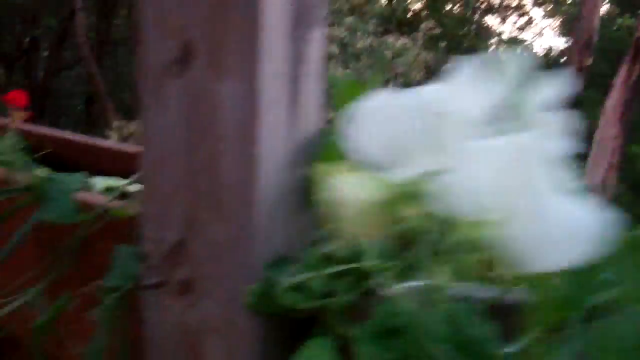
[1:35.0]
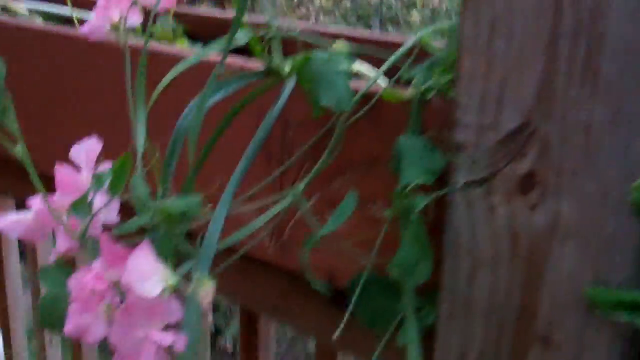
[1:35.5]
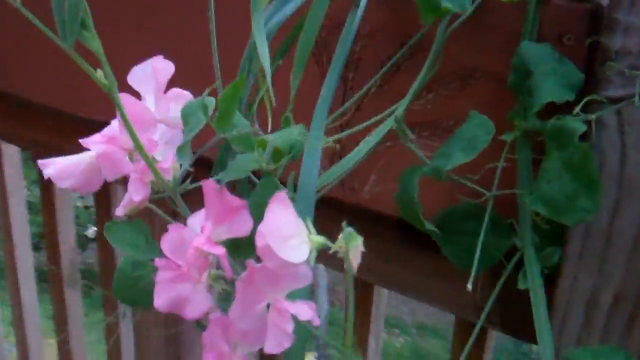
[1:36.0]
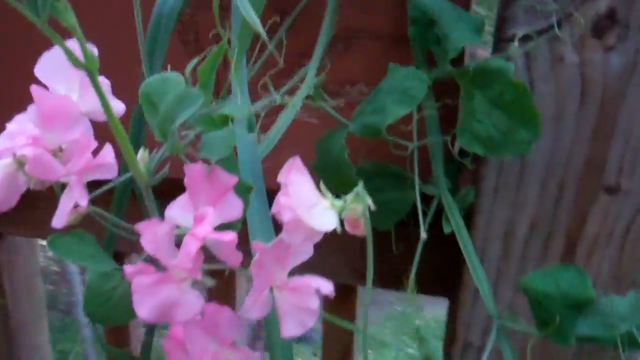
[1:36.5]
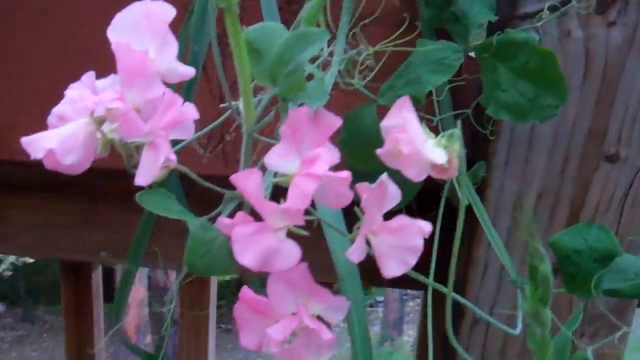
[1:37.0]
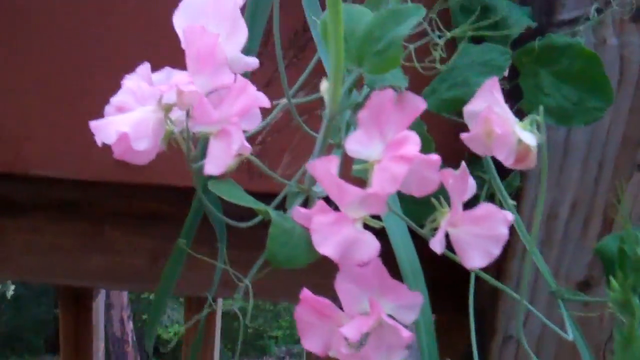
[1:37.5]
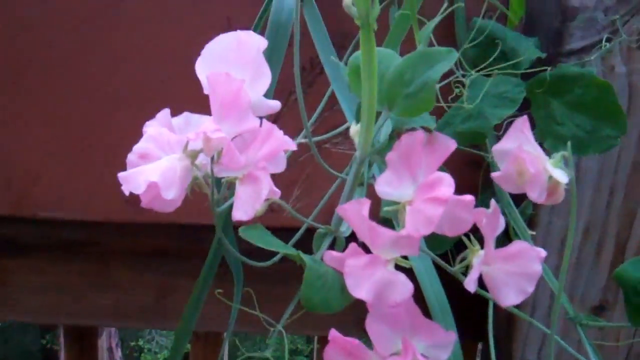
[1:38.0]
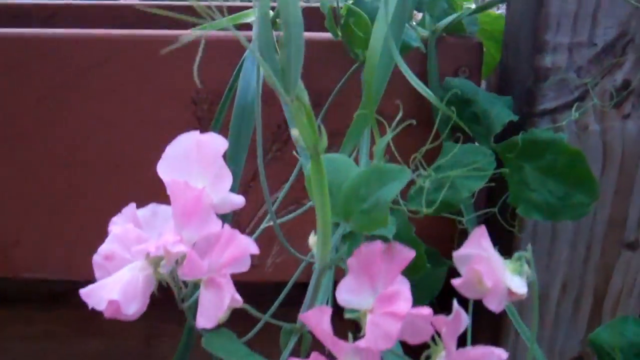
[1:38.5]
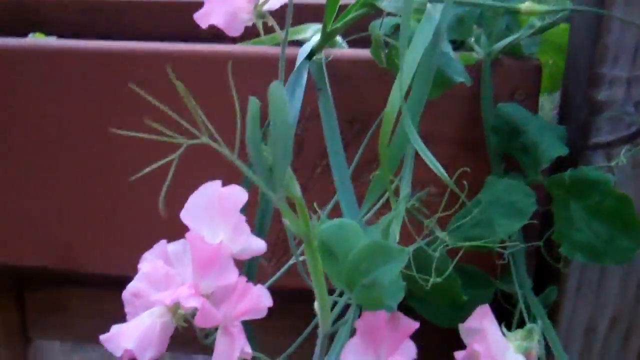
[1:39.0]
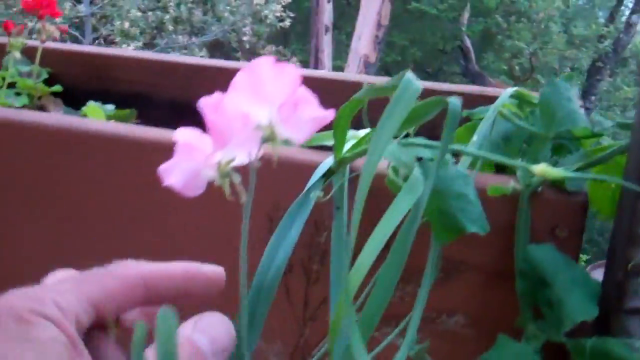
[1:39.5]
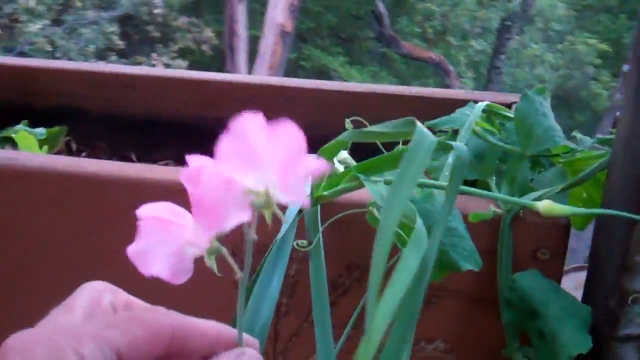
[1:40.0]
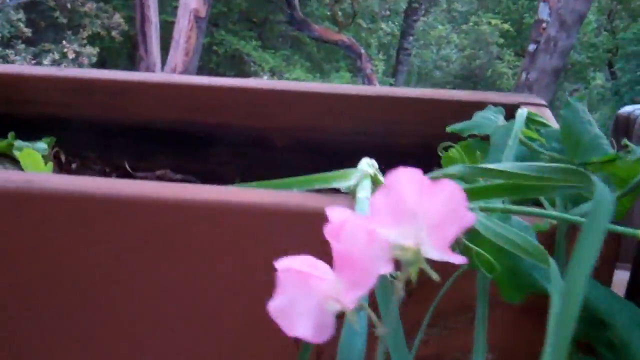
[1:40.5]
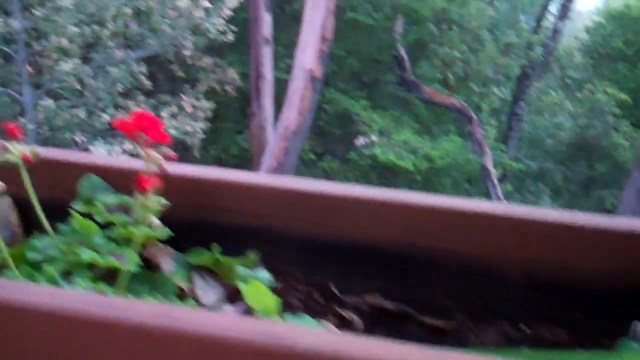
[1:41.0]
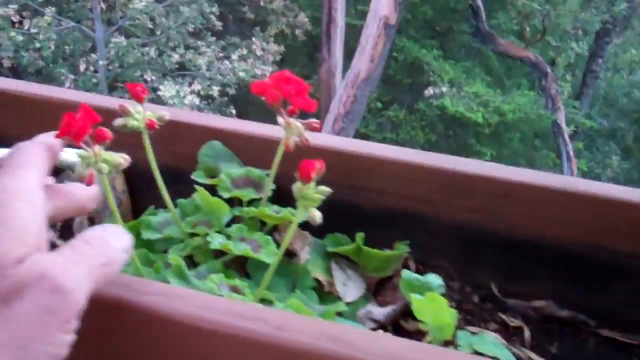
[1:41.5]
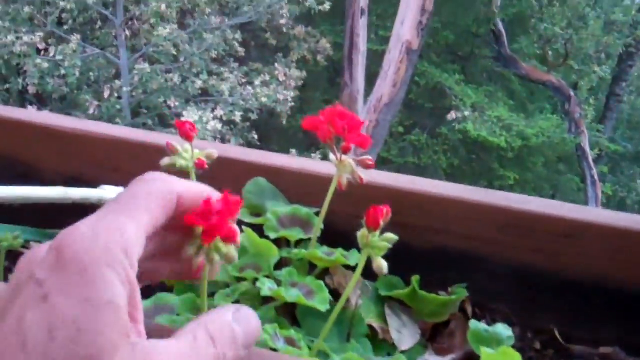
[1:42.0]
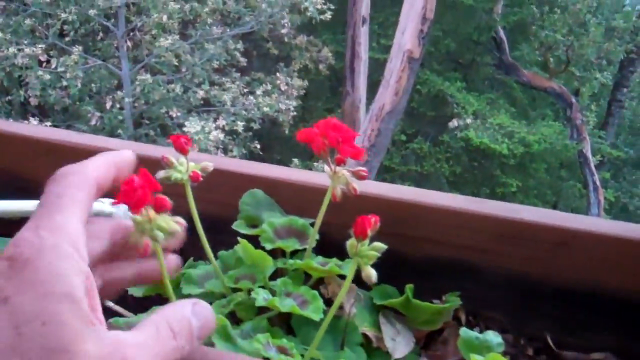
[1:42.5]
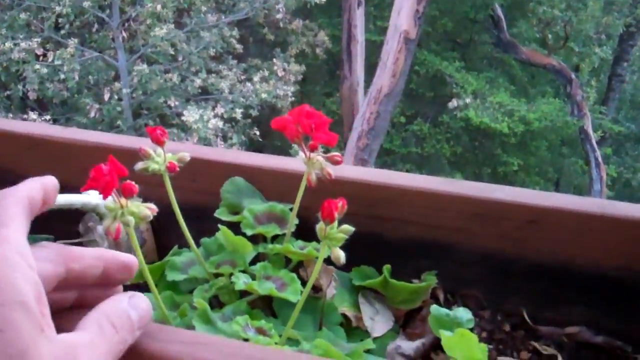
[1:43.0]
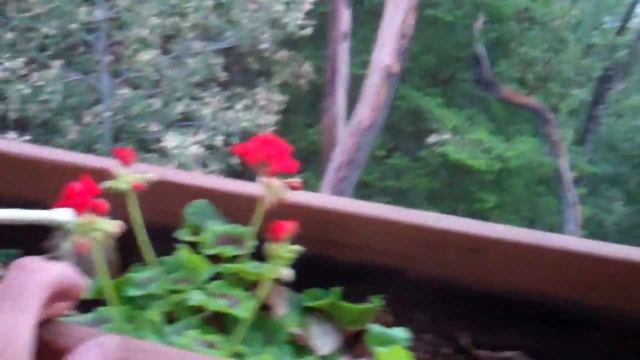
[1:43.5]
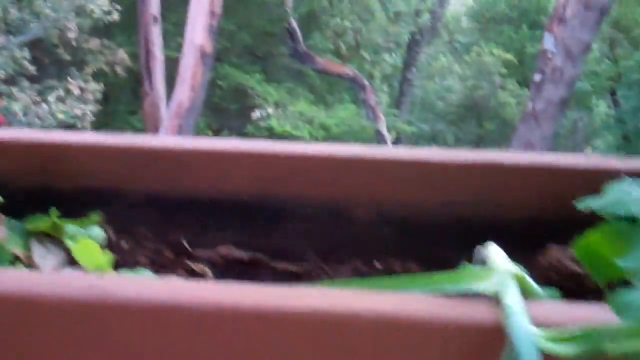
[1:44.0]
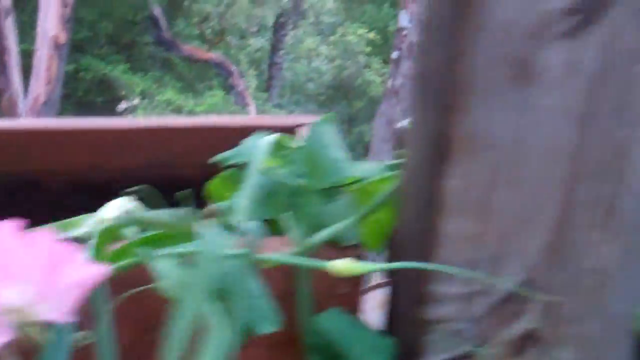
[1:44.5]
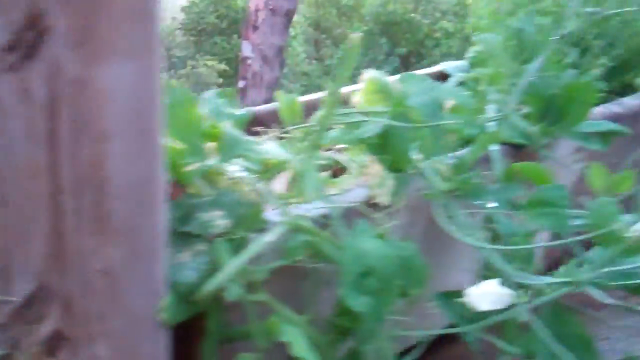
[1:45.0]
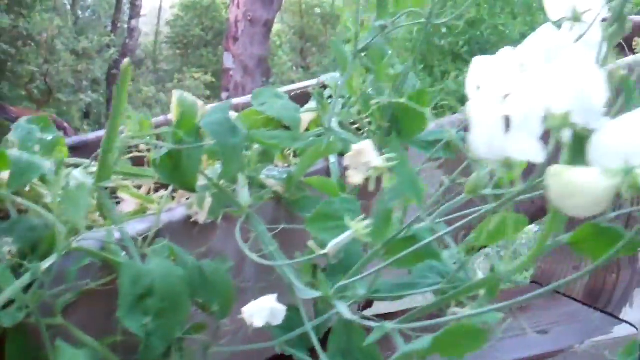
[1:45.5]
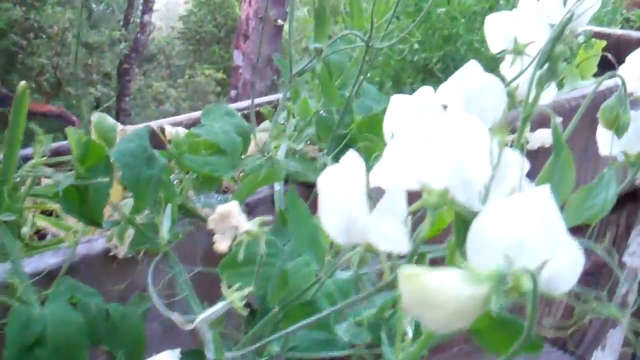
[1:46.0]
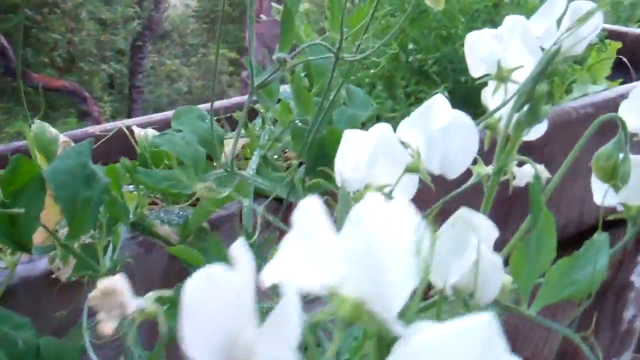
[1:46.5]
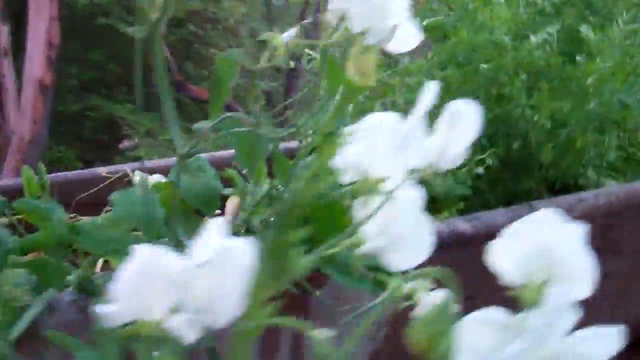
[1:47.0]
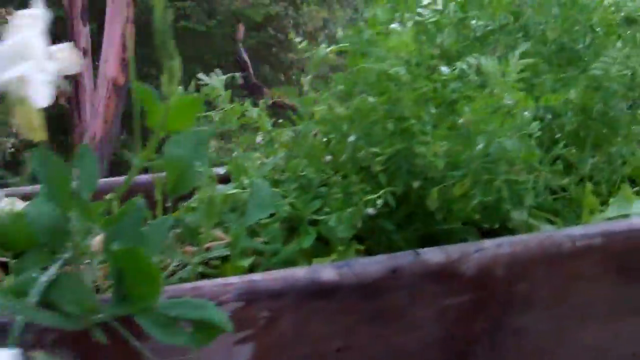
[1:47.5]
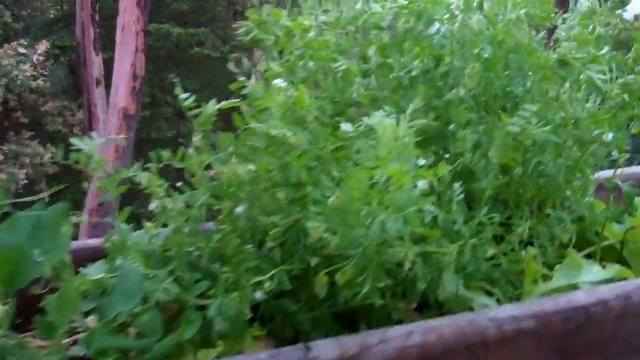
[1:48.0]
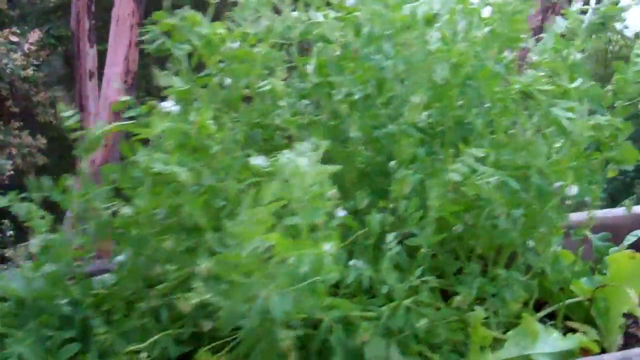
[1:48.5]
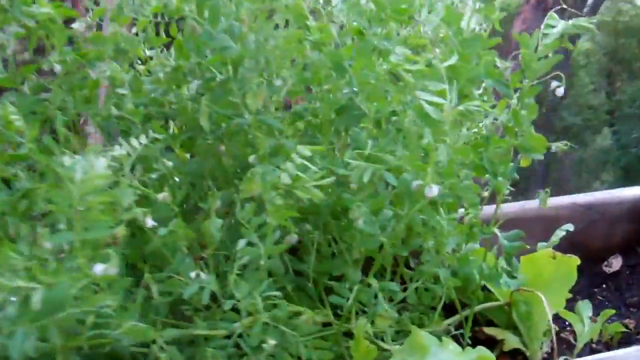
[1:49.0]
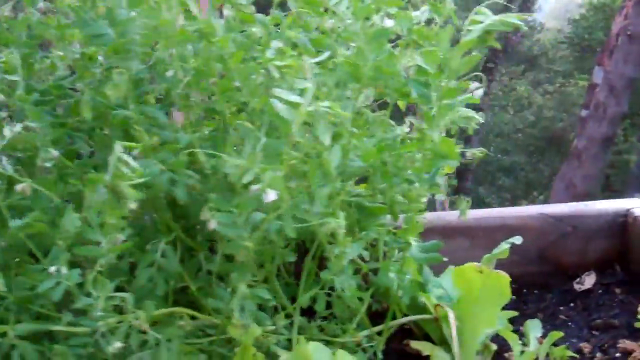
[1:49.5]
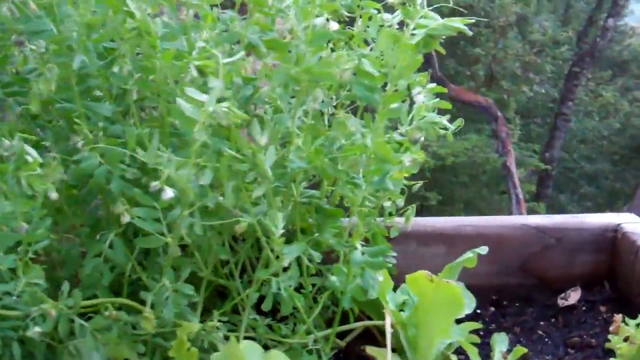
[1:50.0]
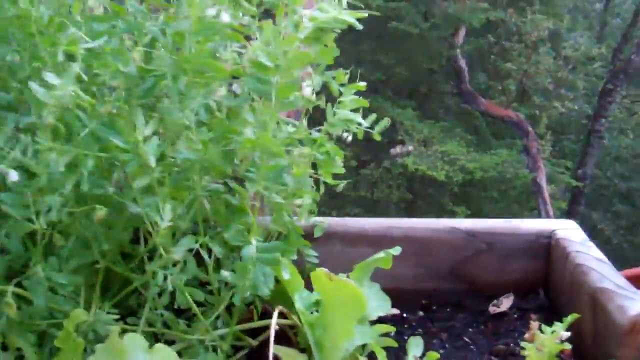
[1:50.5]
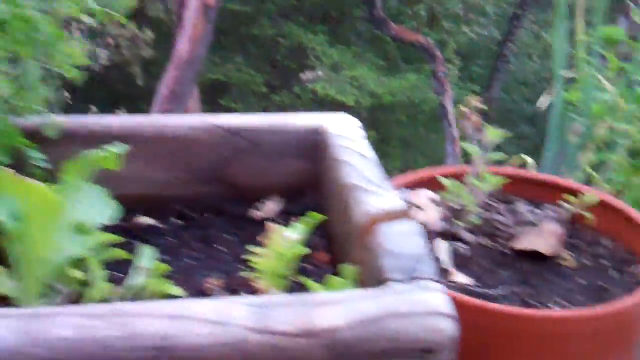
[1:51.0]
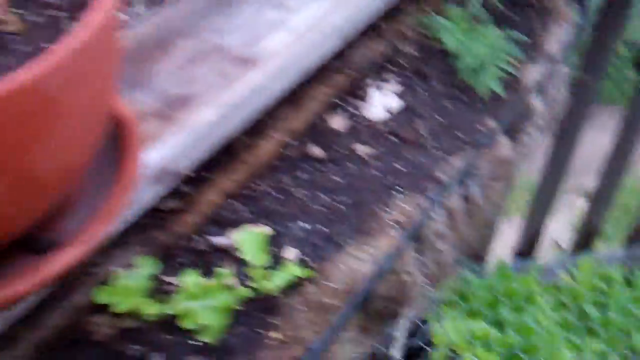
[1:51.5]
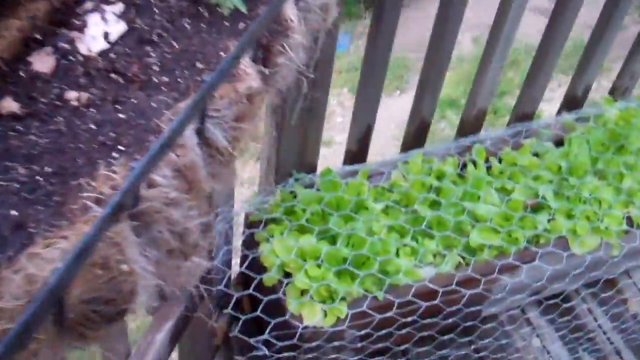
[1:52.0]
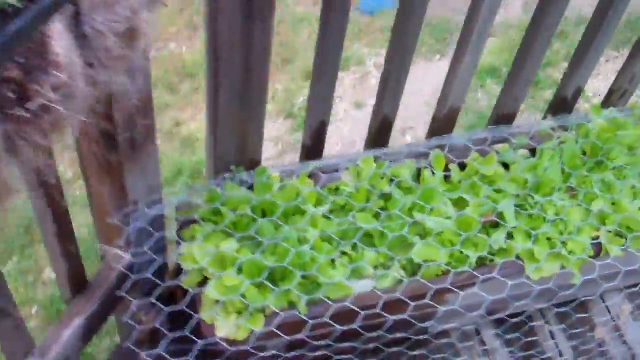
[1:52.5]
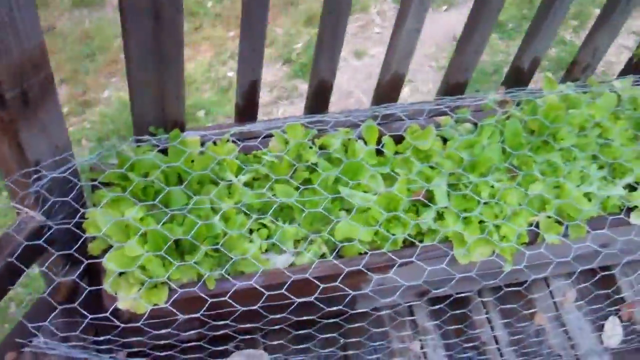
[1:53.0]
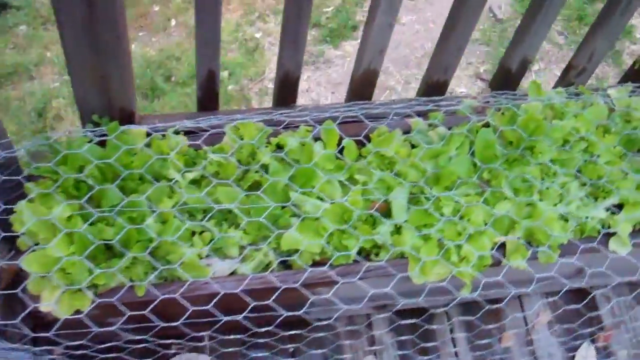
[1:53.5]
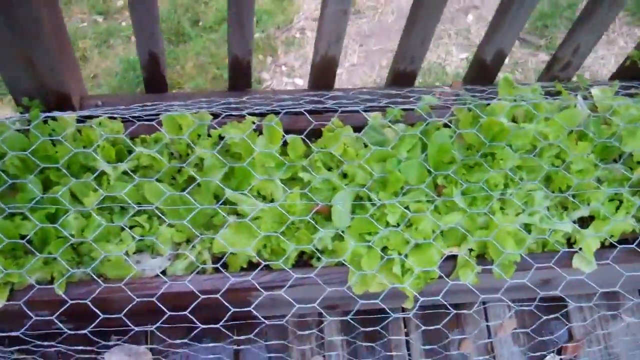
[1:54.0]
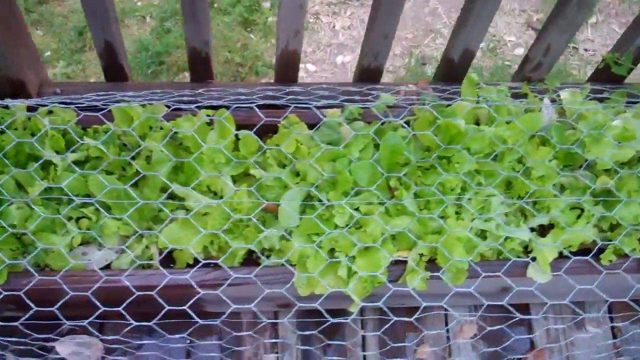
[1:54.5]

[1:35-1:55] The man pans to the left, showing other flowers he has planted. The first is a dangling bunch of flowers similar to the white orchids, but pink. He pans a little more to the left to show a couple of much tinier red flowers of unknown variety, the flower buds about the size of a fingernail. He then pans back to the right, glancing at the potted plant of presumably lentils, and continues further right to show a planted soil bed of unknown vegetables with a wire mesh on top of them, presumably to keep critters from digging them up. The pink flowers seem to be drooping out of the planter box a little, but the flowers themselves seem healthy, with no discernible issues.